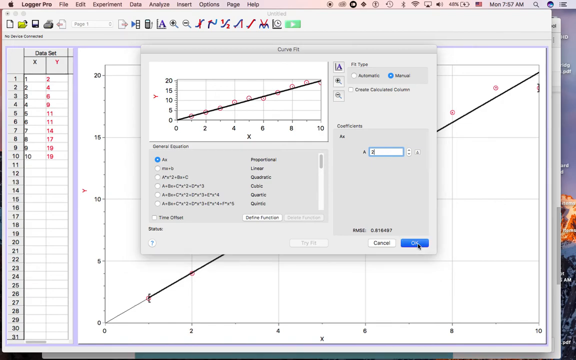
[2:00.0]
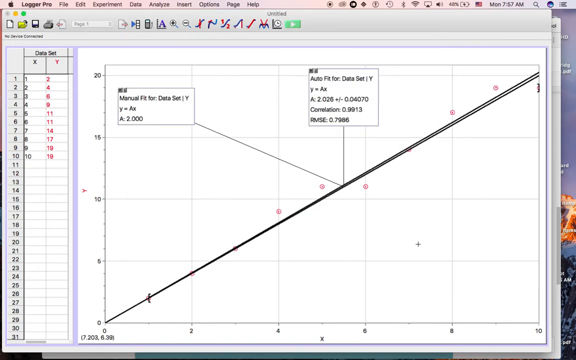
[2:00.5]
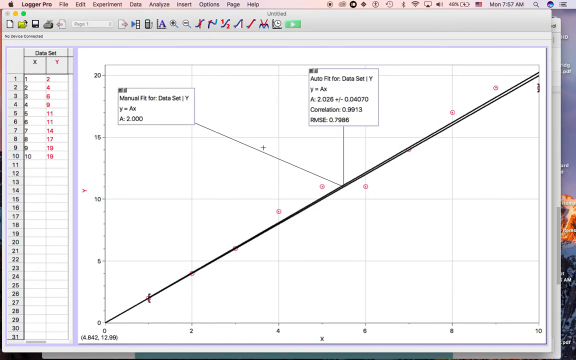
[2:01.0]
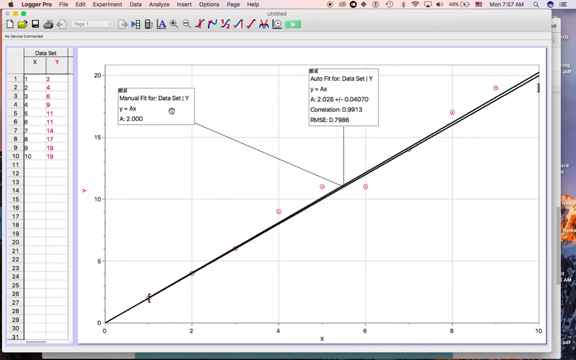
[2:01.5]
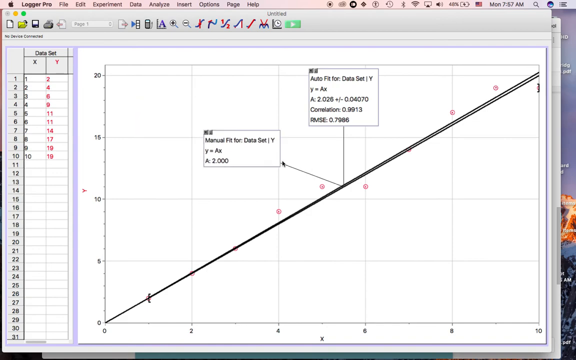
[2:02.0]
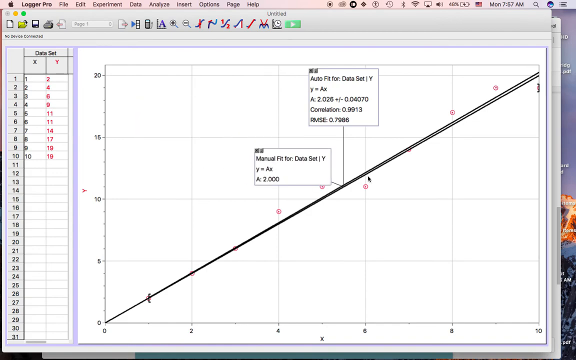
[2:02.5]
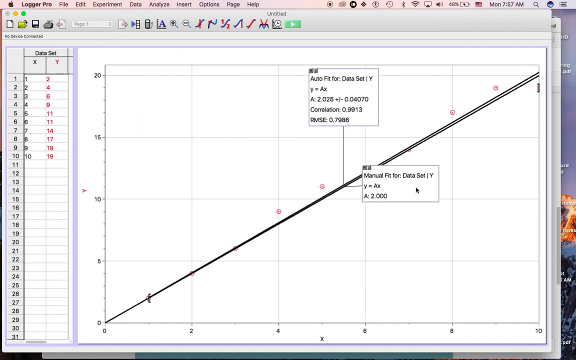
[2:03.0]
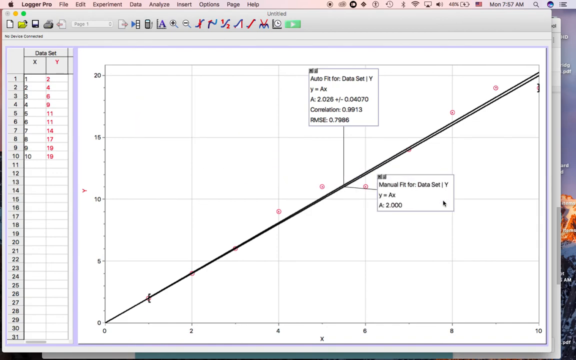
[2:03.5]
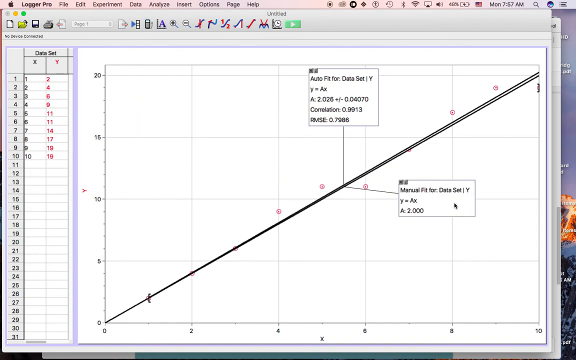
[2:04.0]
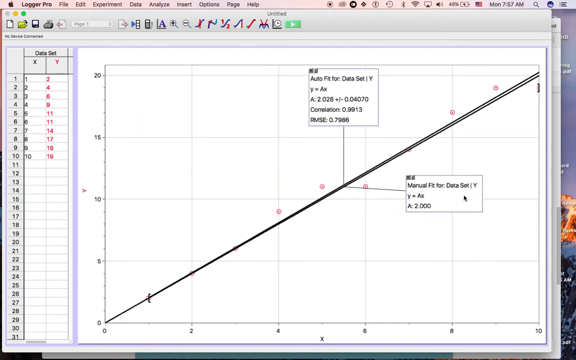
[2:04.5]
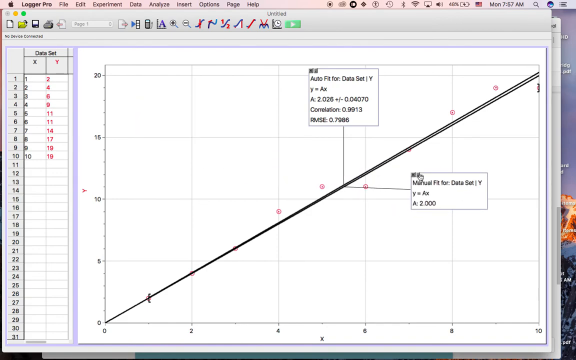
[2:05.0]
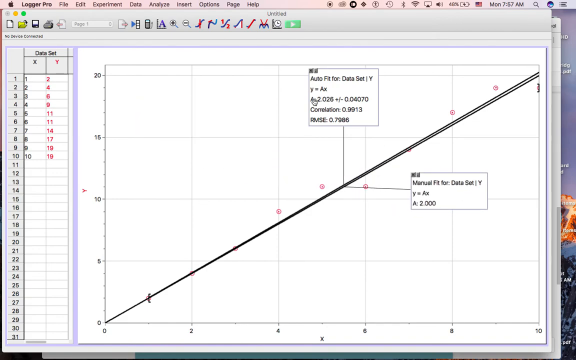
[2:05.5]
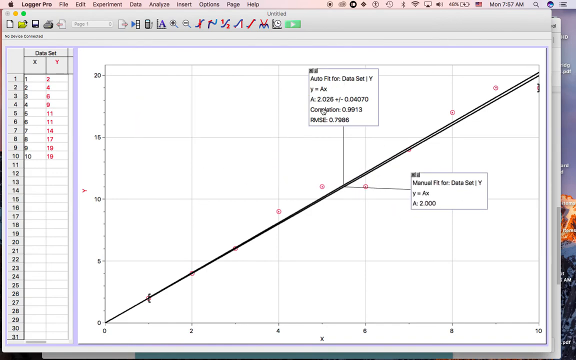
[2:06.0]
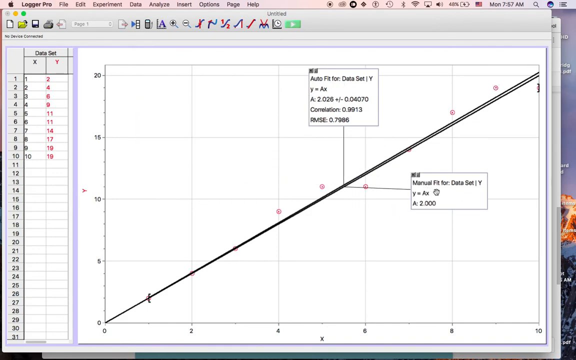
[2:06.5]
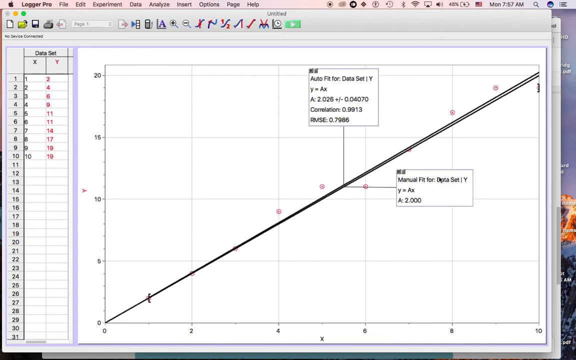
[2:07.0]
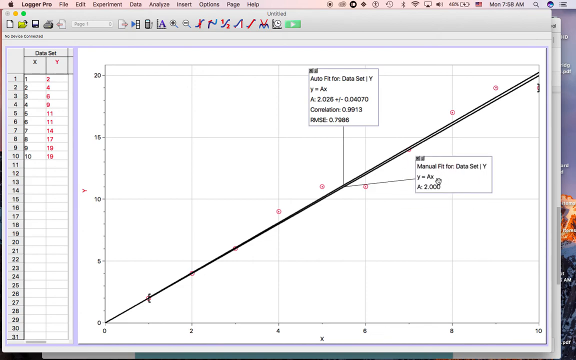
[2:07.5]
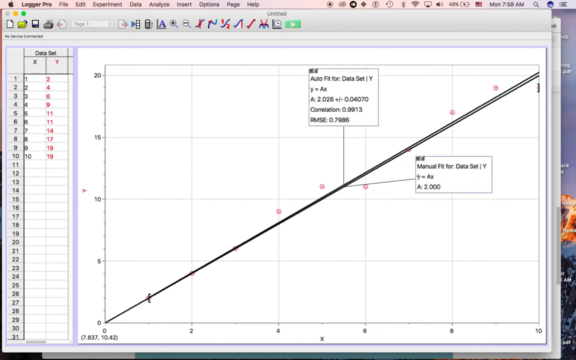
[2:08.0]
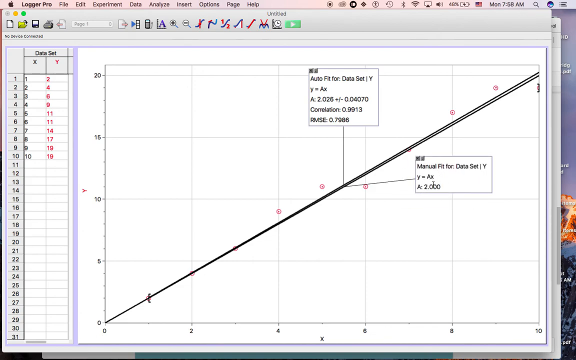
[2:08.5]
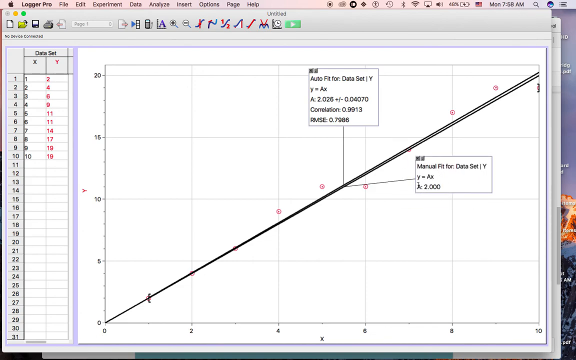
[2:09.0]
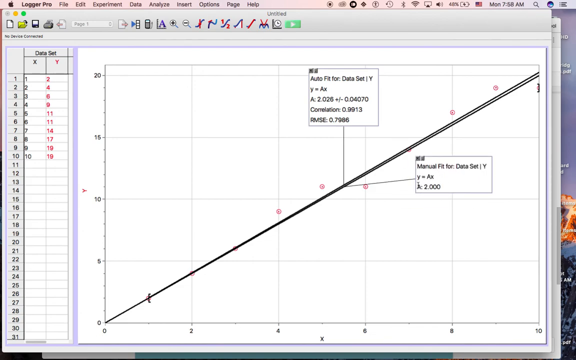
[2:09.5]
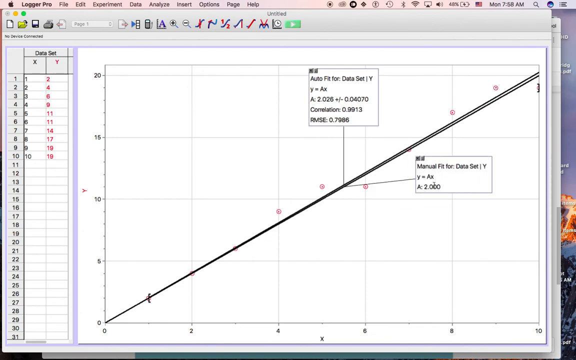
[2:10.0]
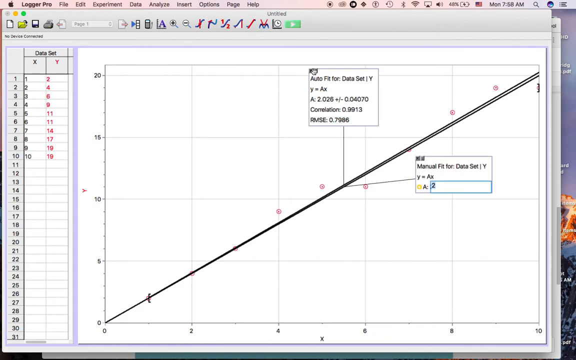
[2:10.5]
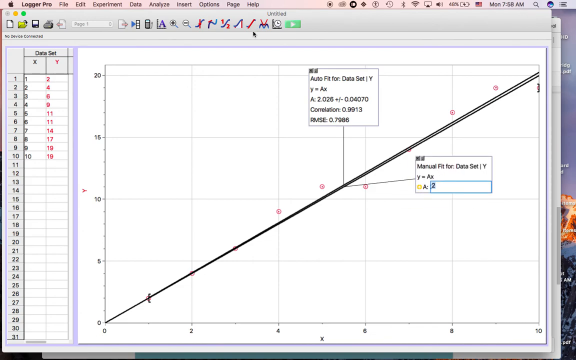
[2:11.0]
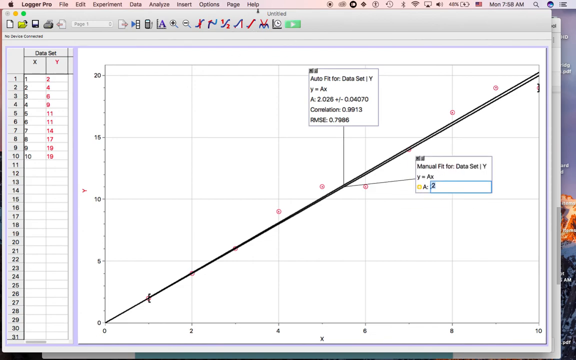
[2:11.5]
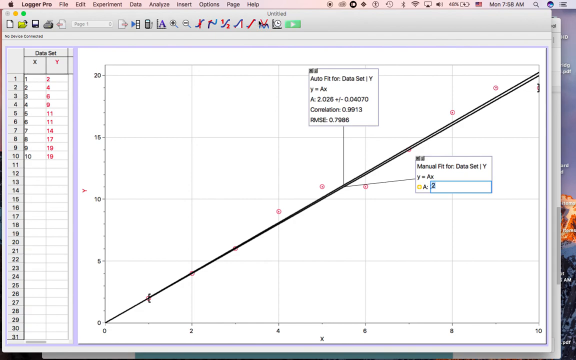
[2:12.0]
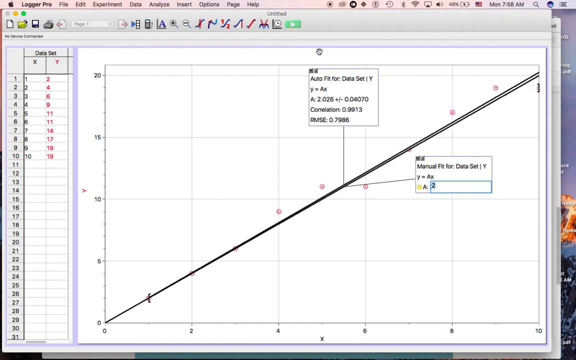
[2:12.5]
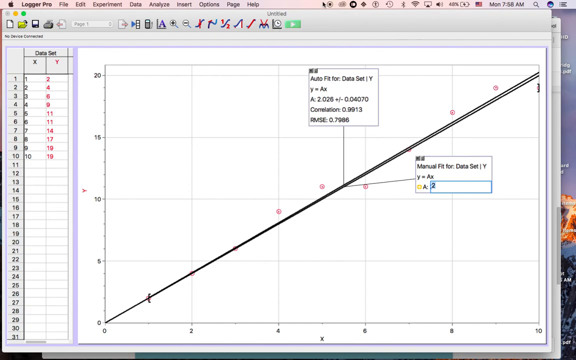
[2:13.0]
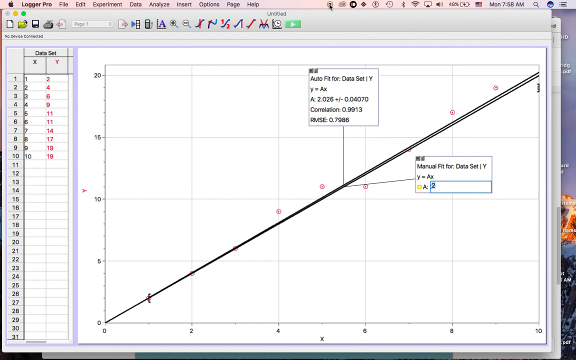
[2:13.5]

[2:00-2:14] The curve fit window disappears, revealing the graph with the diagonal black line running from the bottom left corner upward to the top right corner. The line now splits in two on the right side, a little more than halfway across the graph. Data with formulas is shown in two separate boxes, both coming from the center: the one on the left says it is for a manual fit, and the one on the right says it is for an auto fit. The mouse pointer drags the manual fit box from its original position on the left side over to the right side and positions it there.